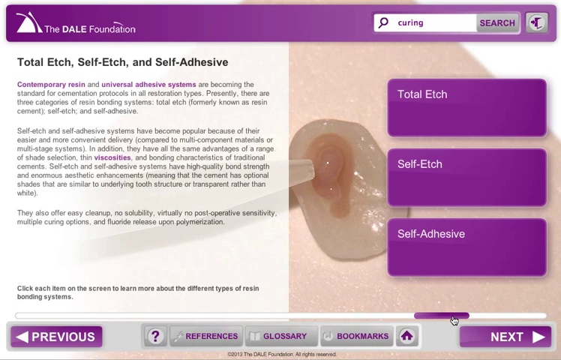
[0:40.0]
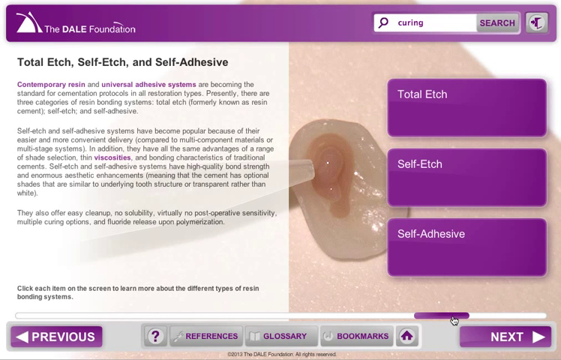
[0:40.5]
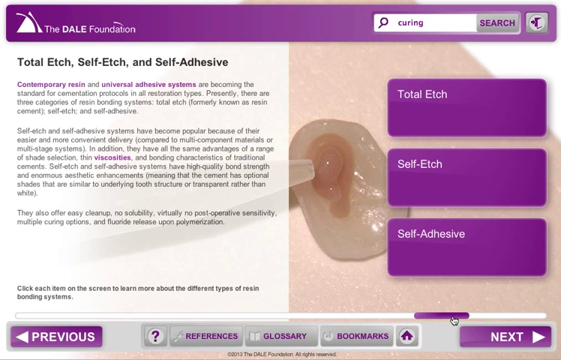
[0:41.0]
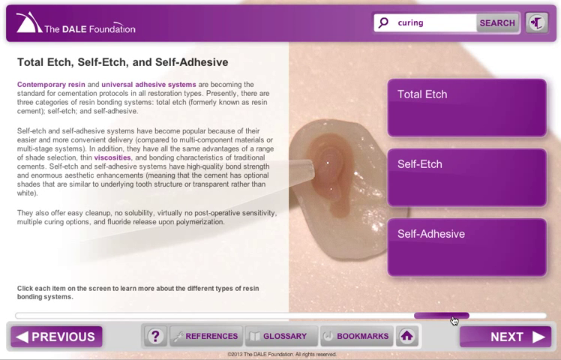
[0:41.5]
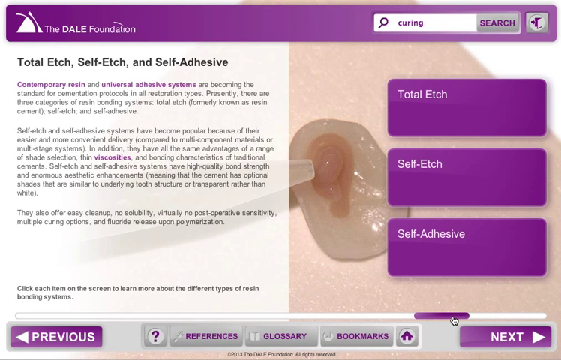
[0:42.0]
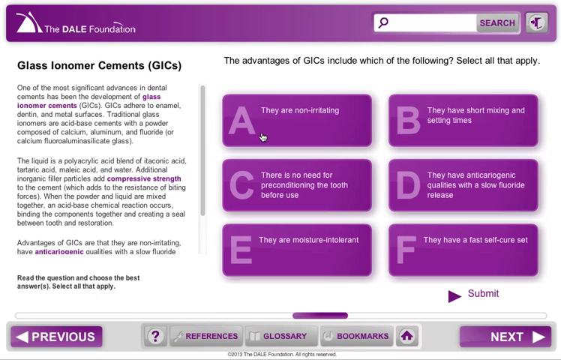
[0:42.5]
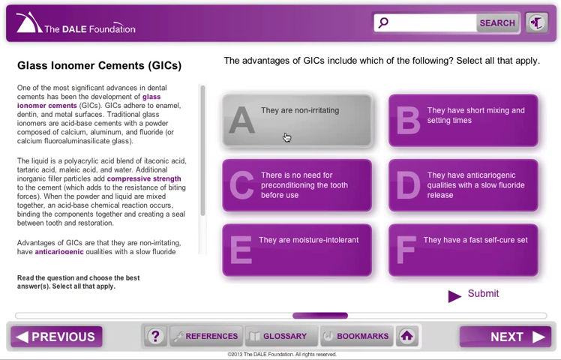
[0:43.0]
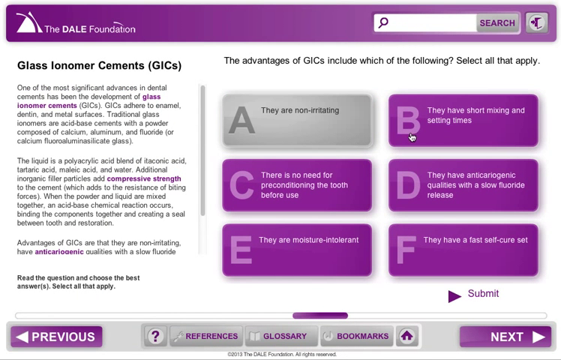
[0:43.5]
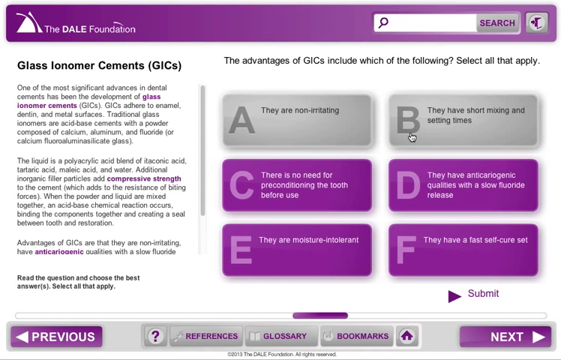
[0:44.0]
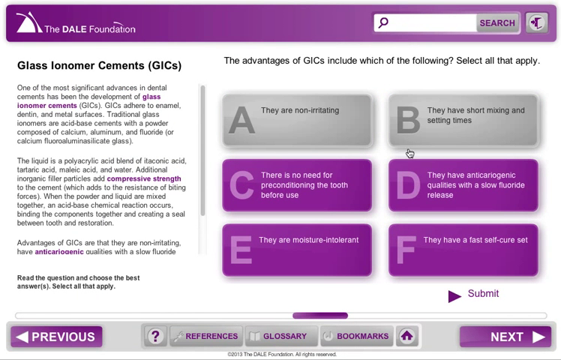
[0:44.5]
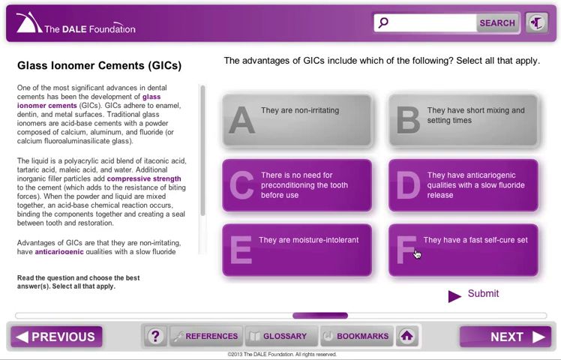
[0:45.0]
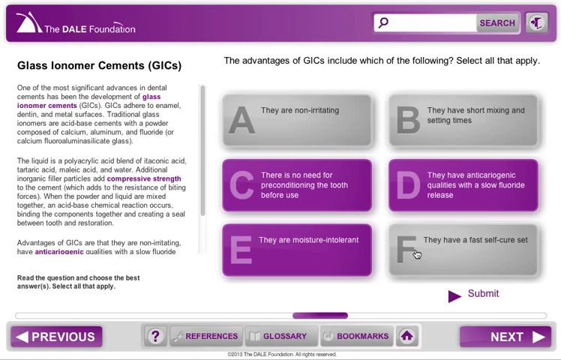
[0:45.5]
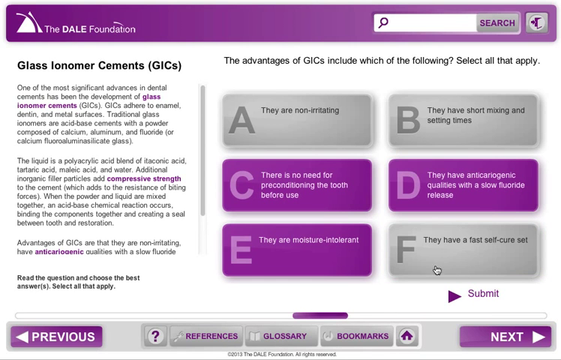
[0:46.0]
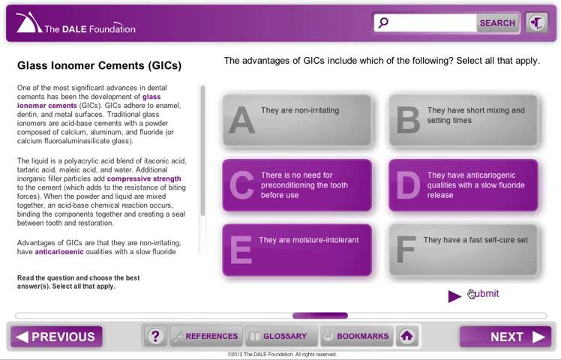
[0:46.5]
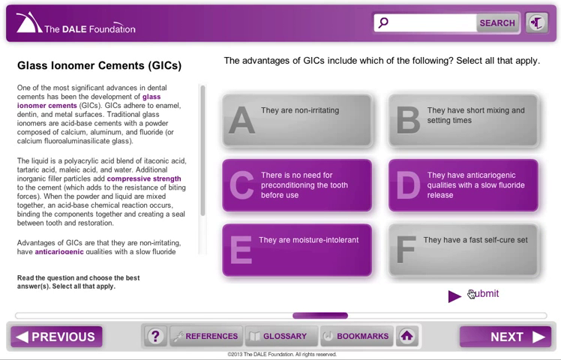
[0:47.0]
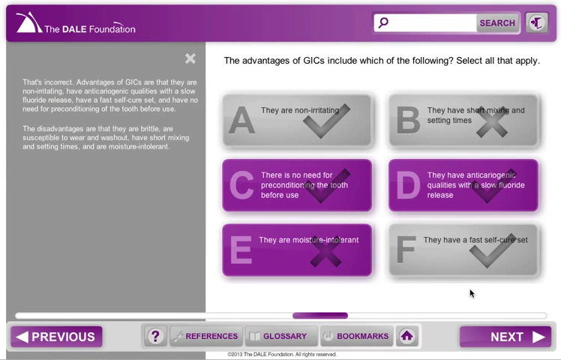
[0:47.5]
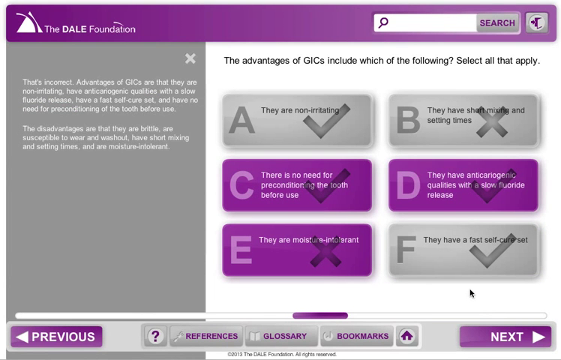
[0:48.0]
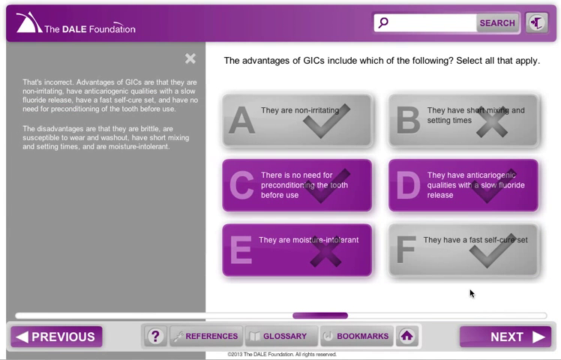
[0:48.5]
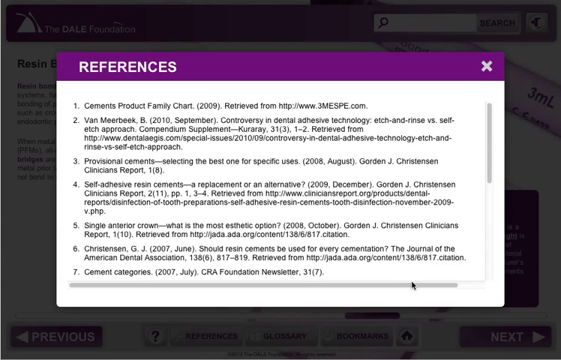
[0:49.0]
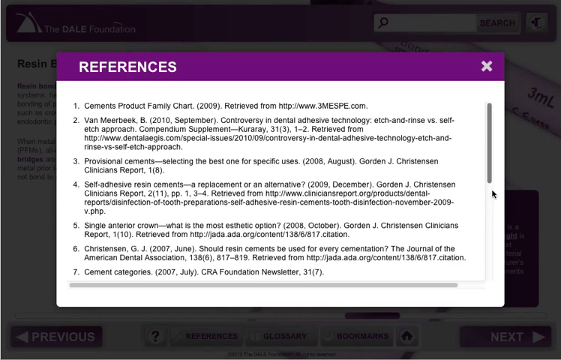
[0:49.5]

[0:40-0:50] The screen shows information on total etch, self etch and self adhesive, with those words in purple text boxes on the right side of the screen. In the background is what appears to be resin, going by the description on the left, which mentions universal adhesive systems "becoming the standard for cementation protocols and all restoration types" and says "click each item on the screen to learn more". The next screen covers glass ionomer cements (GICs). On the right is an interactive question, "the advantages include which are the following", with six clickable options, A through F, including "non-irritating" and "fast self-cure set". The options are all purple but turn grey when clicked, and clicking one brings up a tick or a cross on the screen to show whether the answer is correct.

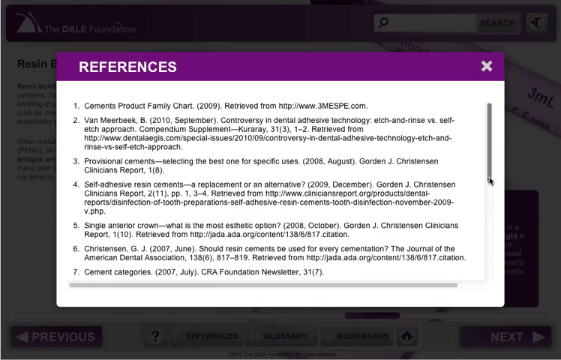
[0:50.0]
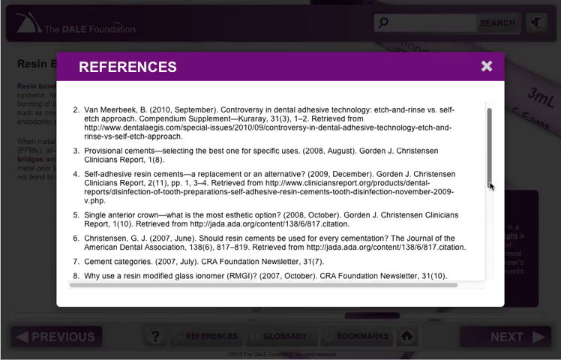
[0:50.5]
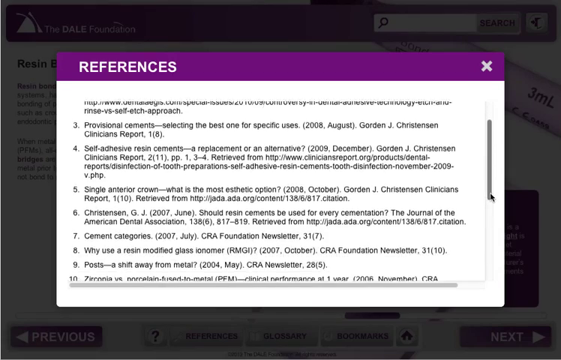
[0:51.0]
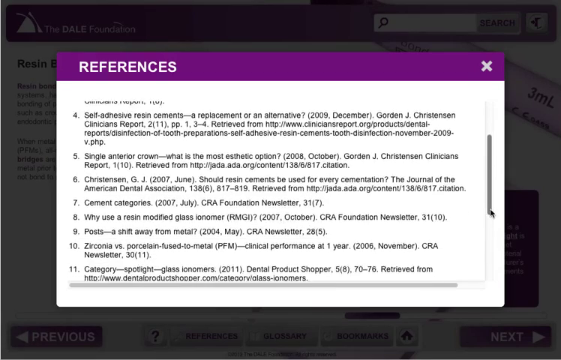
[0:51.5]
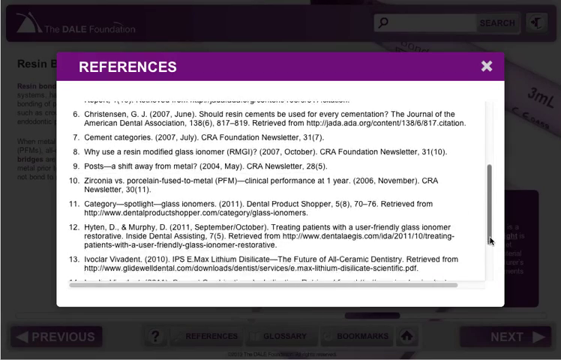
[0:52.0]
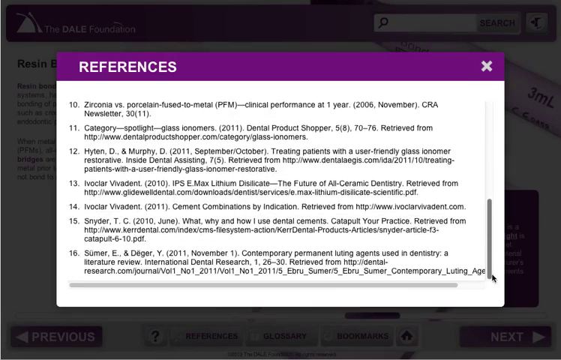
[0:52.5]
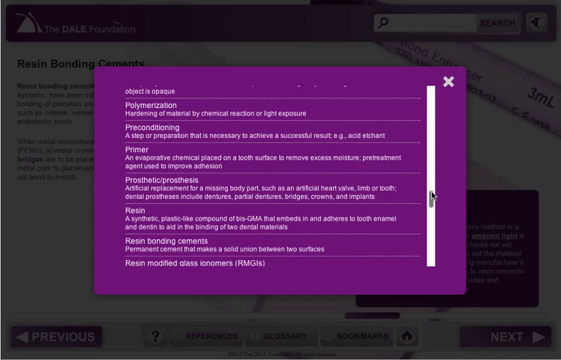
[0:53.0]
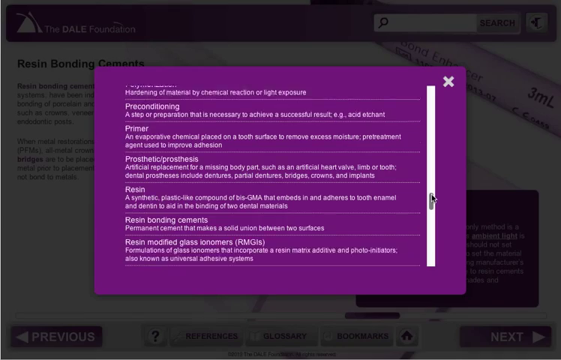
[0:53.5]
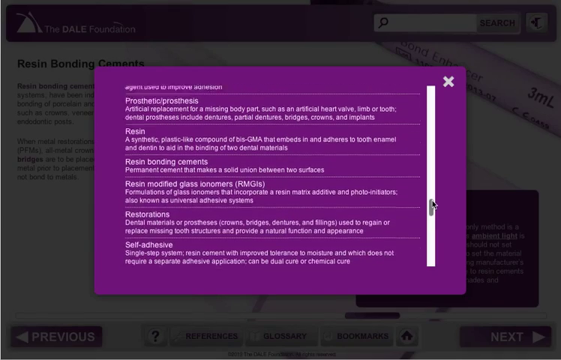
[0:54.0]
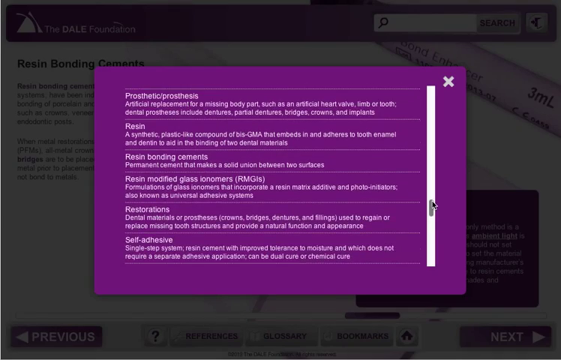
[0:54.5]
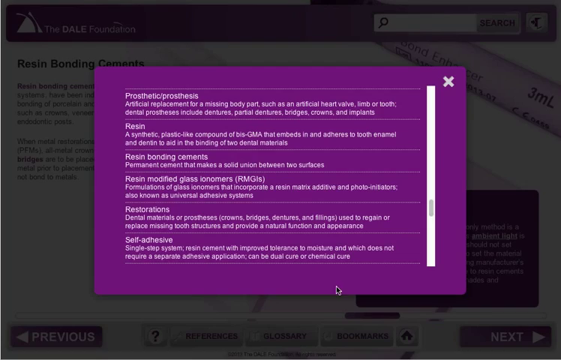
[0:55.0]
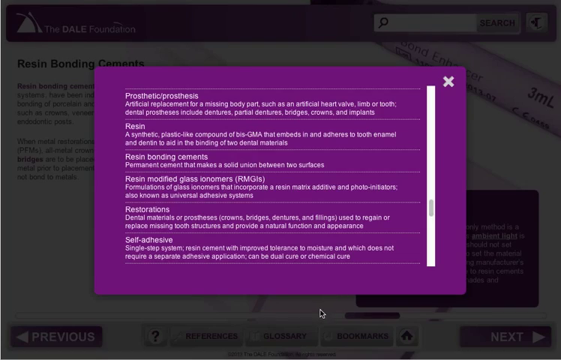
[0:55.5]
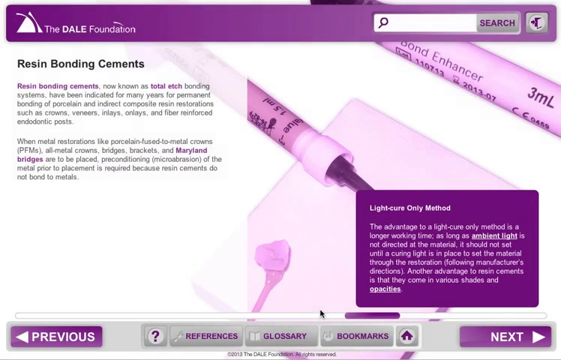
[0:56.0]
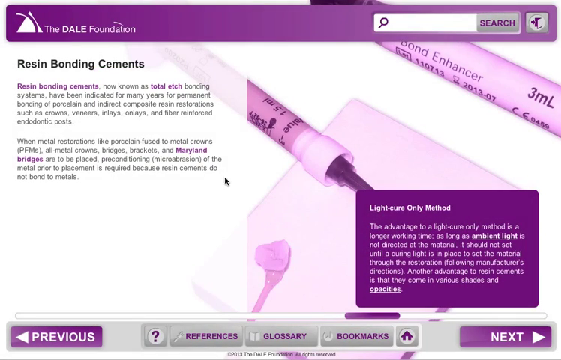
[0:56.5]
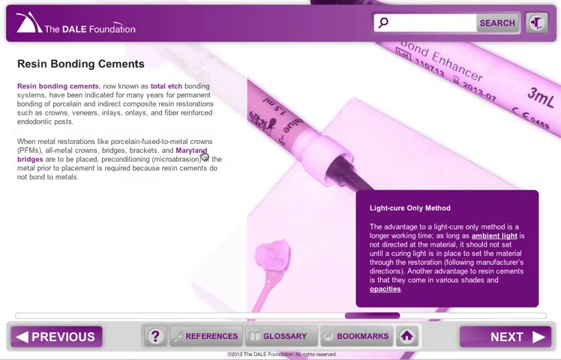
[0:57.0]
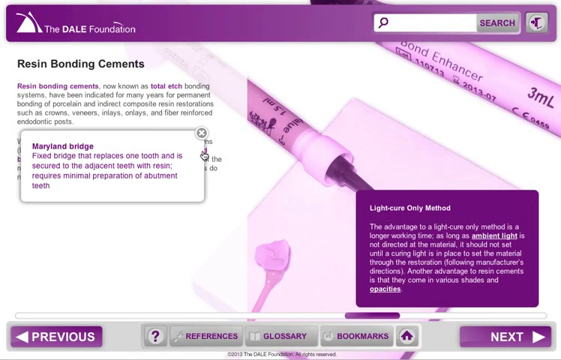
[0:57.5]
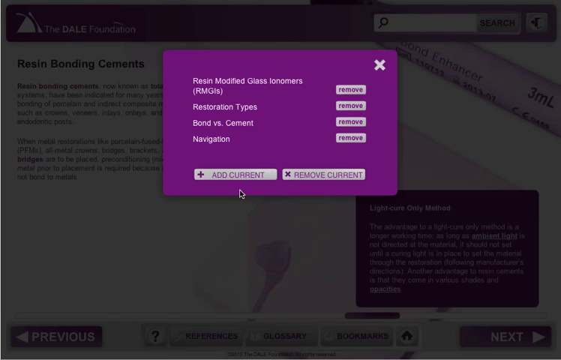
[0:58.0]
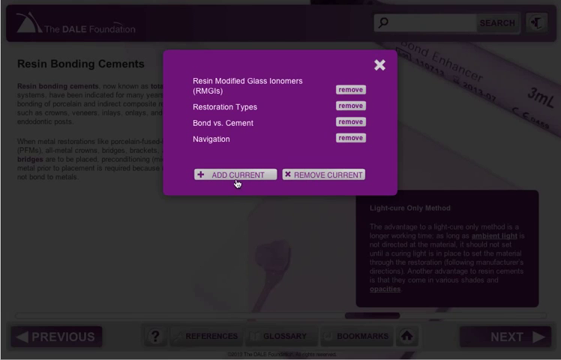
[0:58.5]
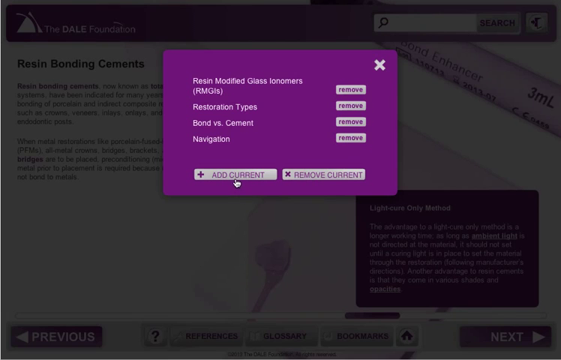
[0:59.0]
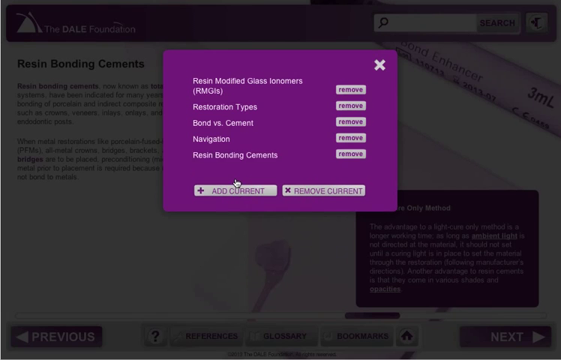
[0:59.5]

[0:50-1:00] The clickable References tab at the bottom brings up a list of references, with seven appearing on the first page before the cursor moves down to reveal more. Each entry follows the same format: the name of the item, the year of publication, "retrieved from", and the website name. For example, number one is "Cement's product family chart", from 2009. Some entries are more specific and include page and paragraph references.